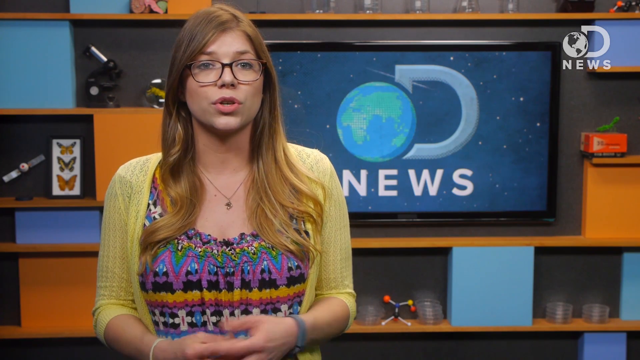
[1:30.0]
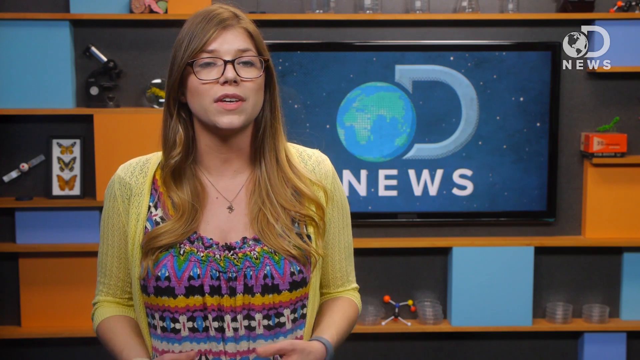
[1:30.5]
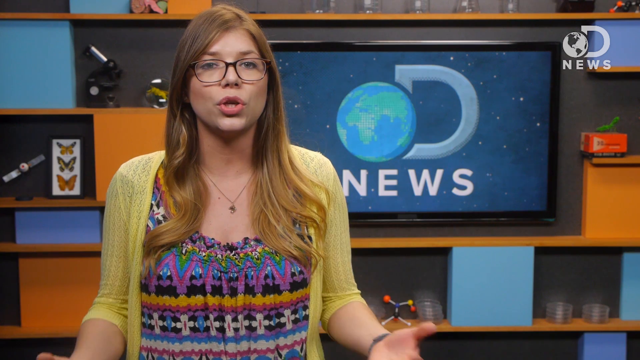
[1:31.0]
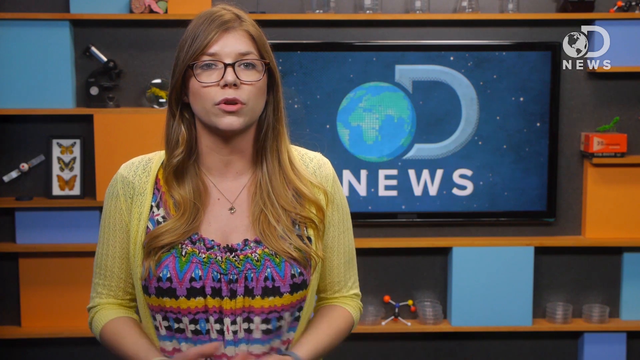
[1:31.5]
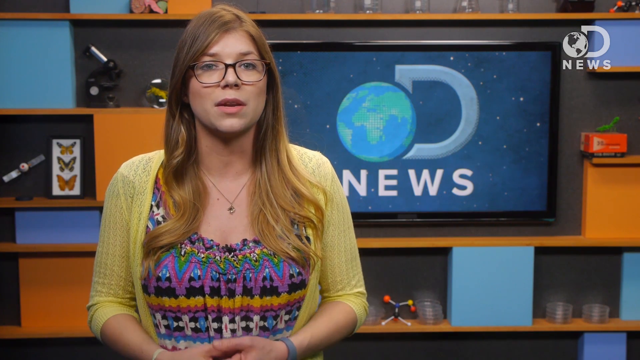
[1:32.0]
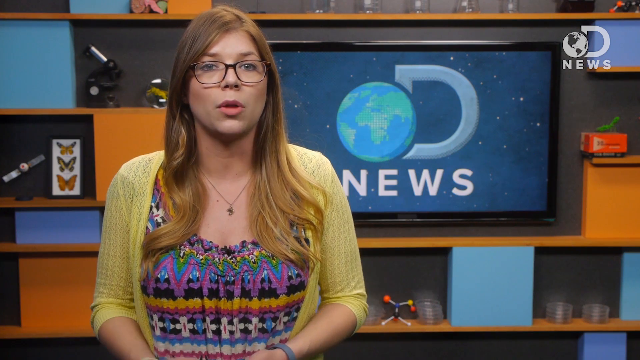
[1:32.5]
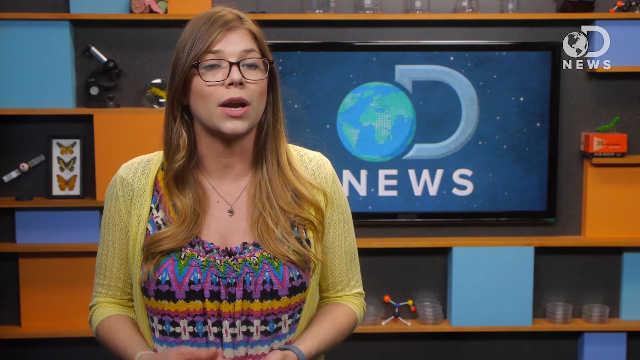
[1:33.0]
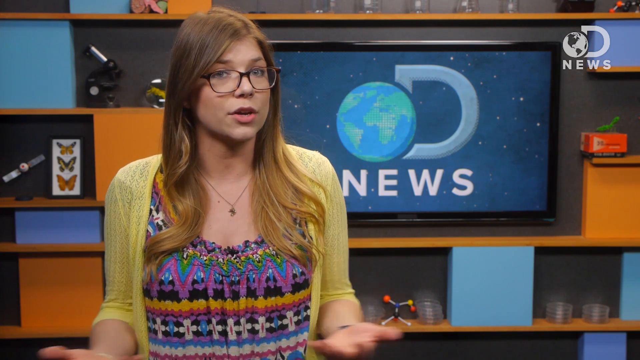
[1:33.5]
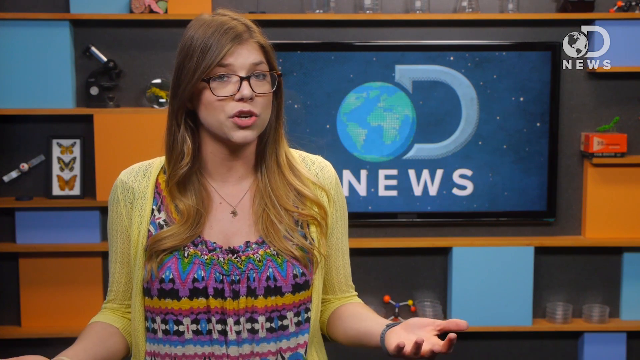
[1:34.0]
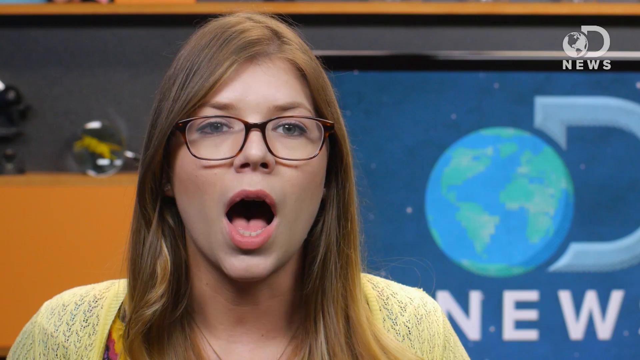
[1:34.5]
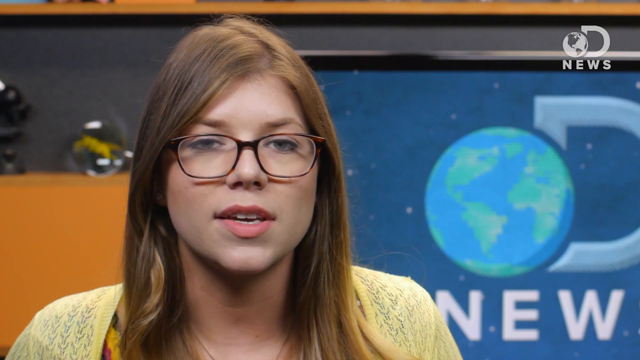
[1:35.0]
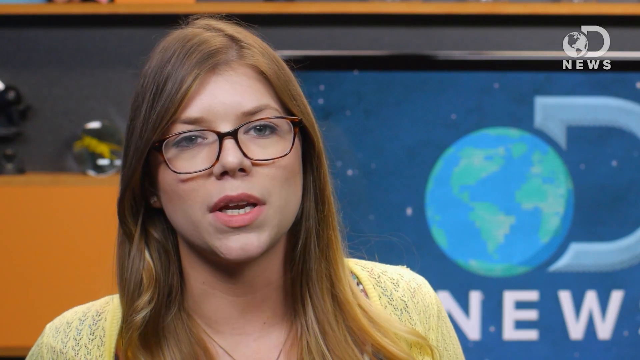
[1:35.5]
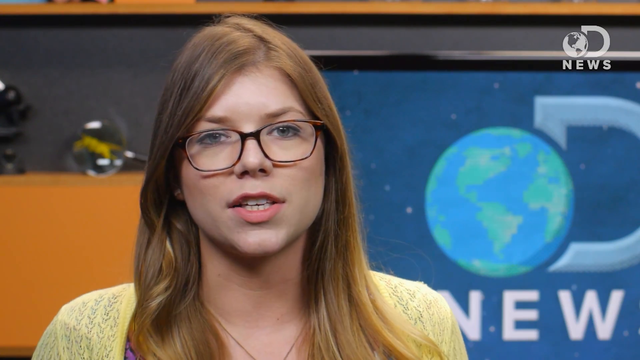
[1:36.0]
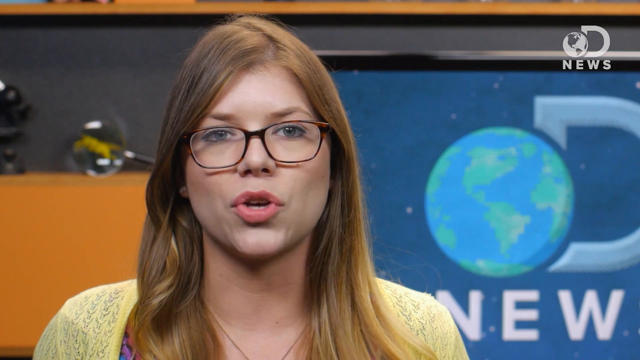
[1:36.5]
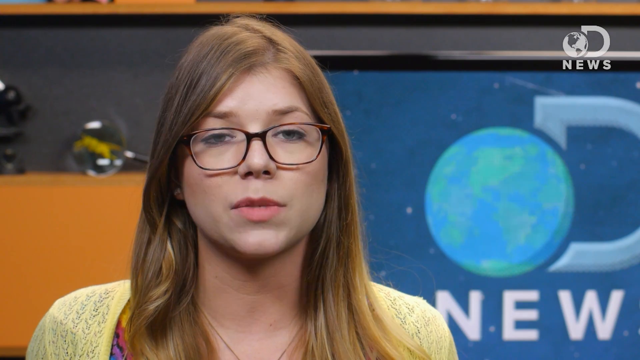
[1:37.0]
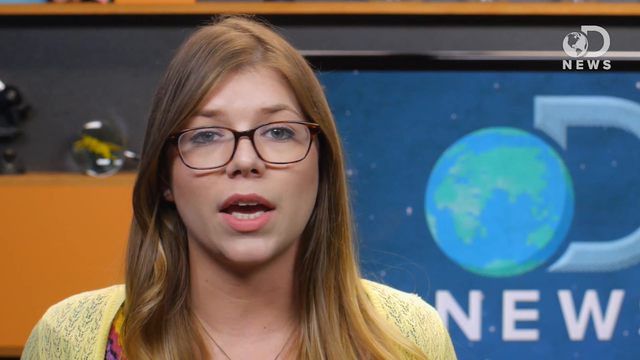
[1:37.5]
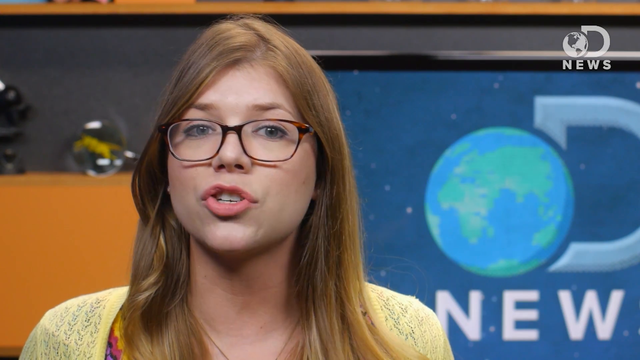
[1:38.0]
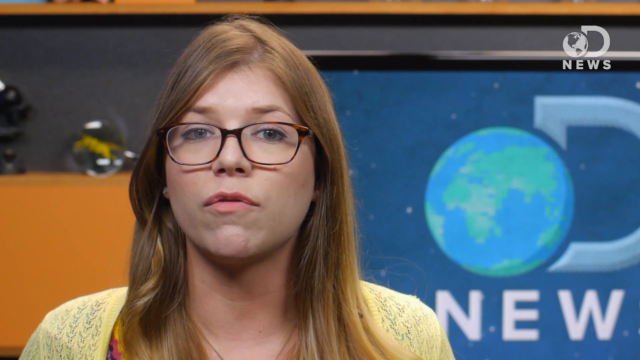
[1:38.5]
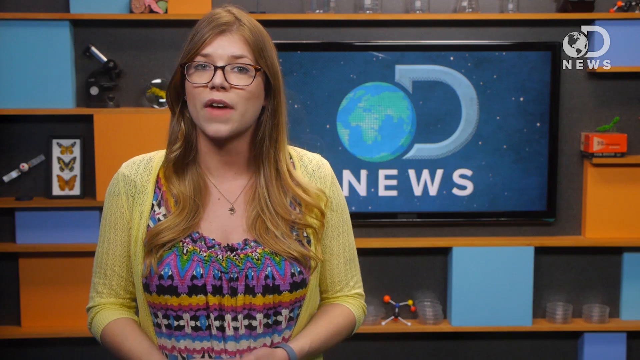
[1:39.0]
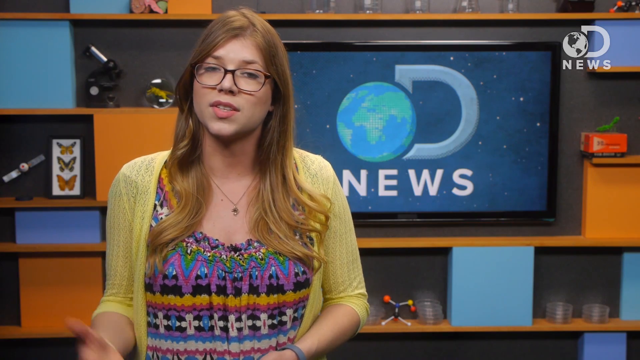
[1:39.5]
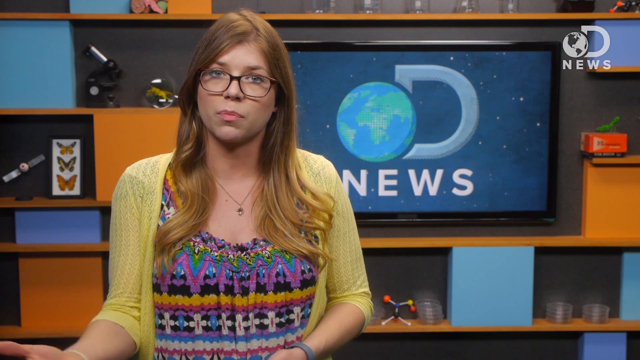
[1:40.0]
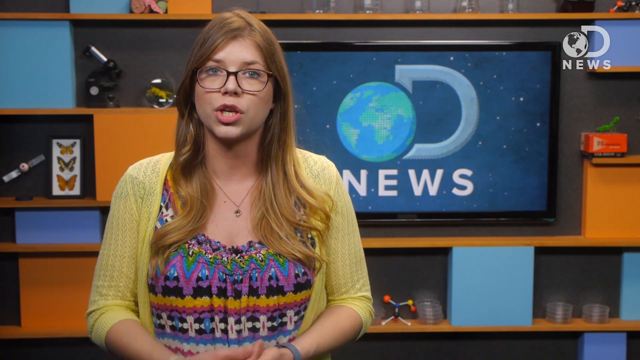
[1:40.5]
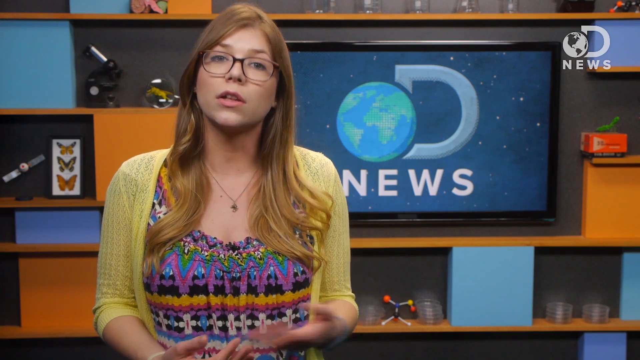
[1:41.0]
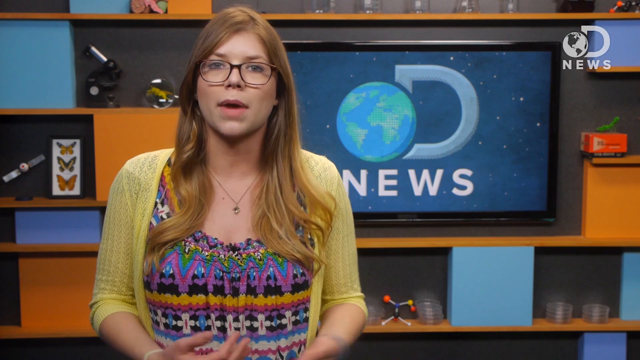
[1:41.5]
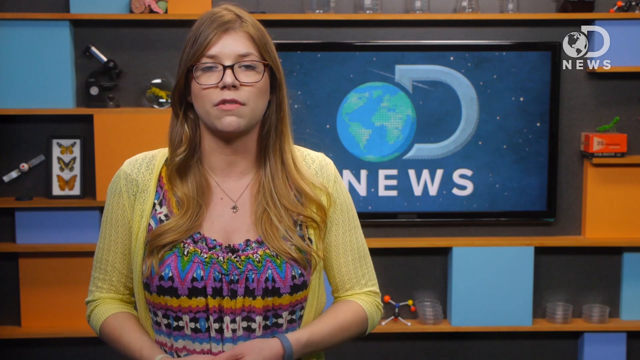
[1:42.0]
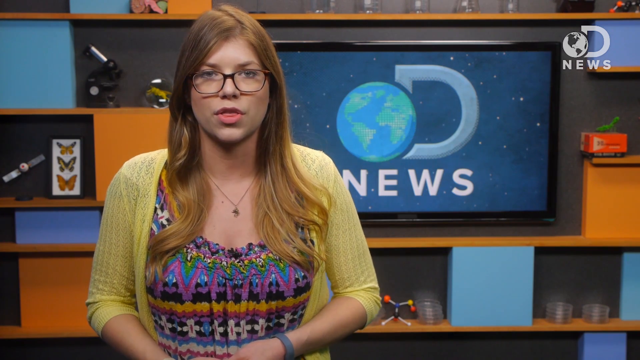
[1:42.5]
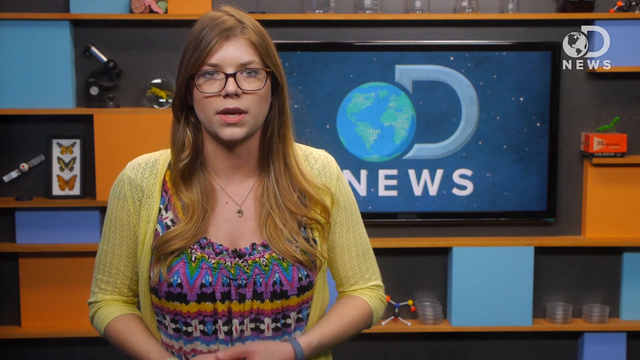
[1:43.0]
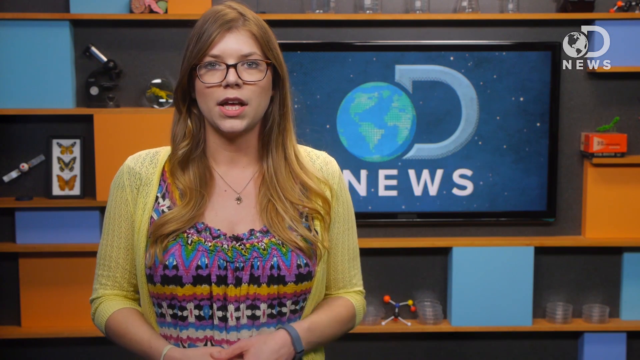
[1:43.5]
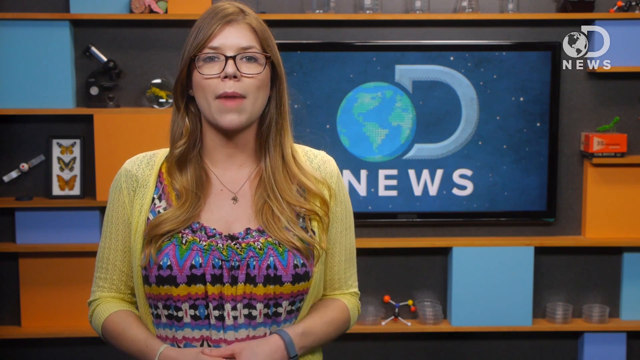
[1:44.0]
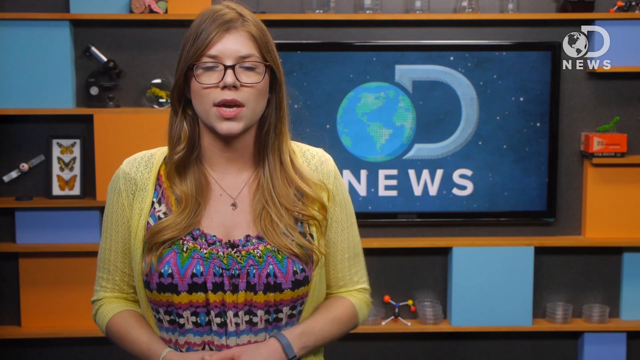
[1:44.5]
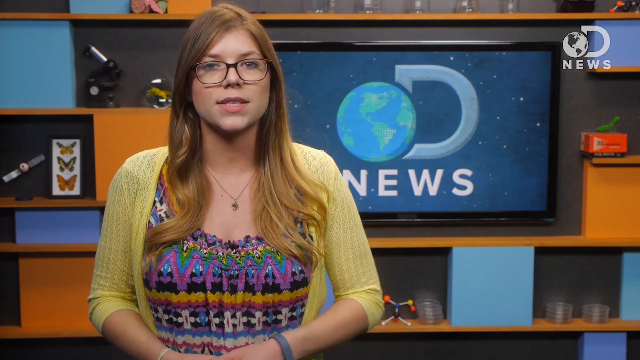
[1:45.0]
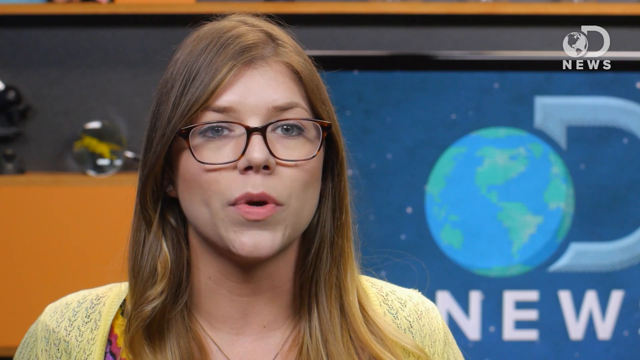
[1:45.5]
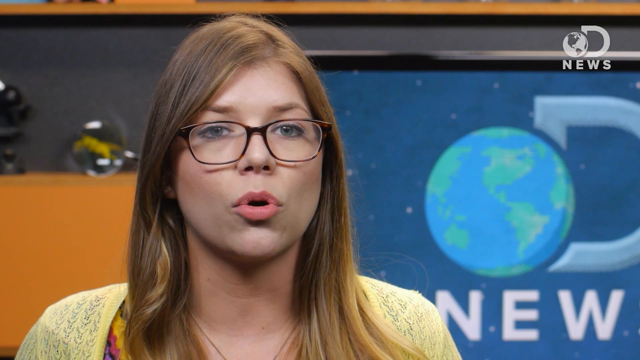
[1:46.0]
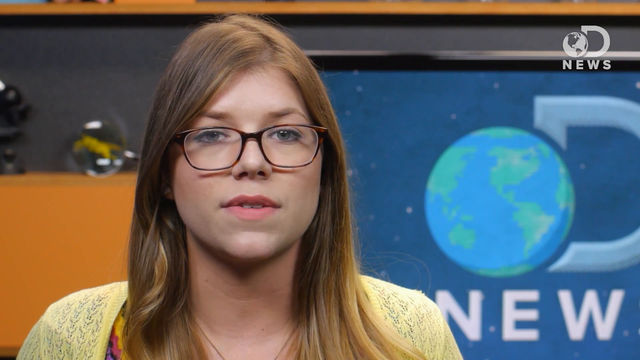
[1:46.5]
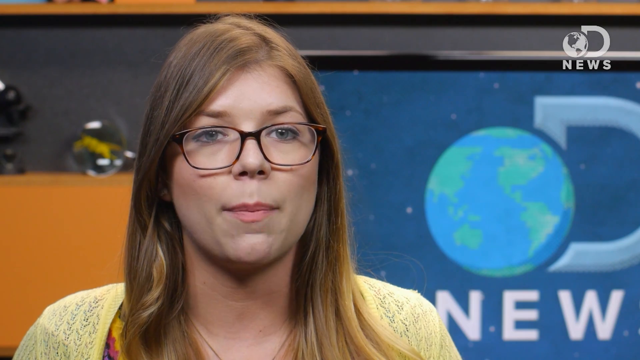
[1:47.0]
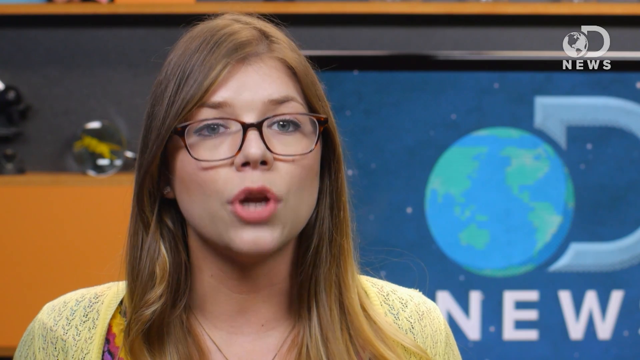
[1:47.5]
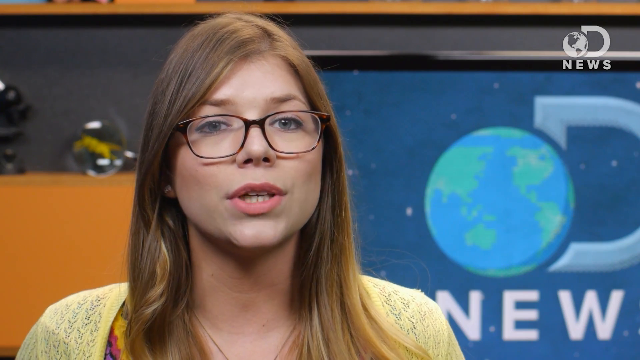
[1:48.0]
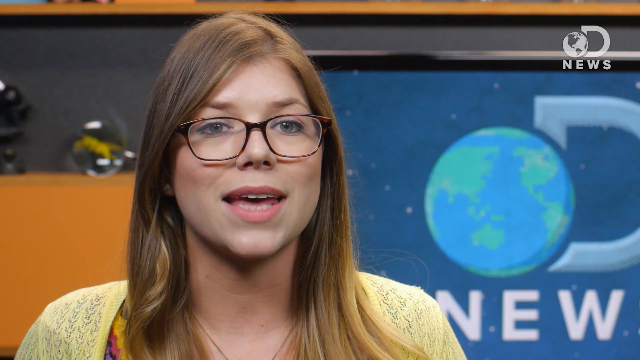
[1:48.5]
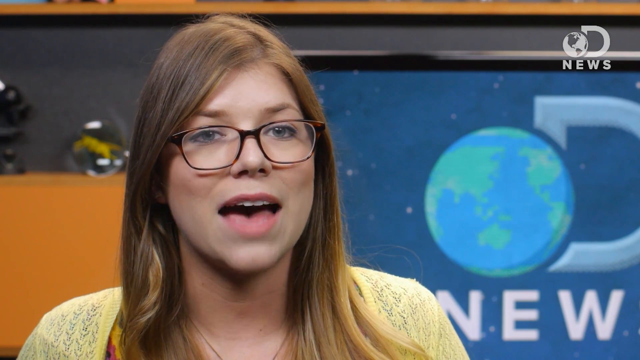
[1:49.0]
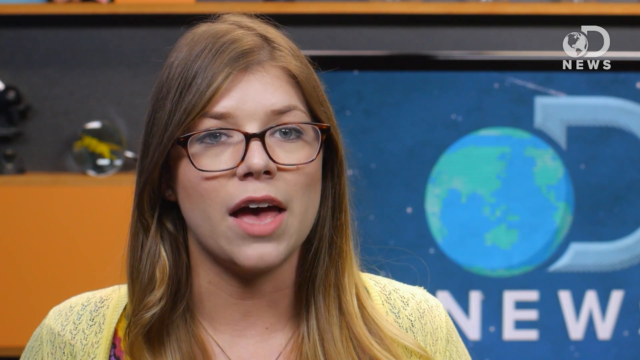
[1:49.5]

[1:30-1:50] In a waist-up shot, the reporter stands in the Discovery News studio with her hands folded in front of her. She separates them, pinches her fingers and thumbs together, lifts them up and down once, then throws her hands out wide and brings them back together. With her hands together in front of her, she continues to speak and bounces her elbows against her sides. She throws her hands out again, palms upward, elbows bent at about 90 degrees. The video immediately cuts to a shoulder-up view of her continuing to speak into the camera with her hands folded in front of her; she holds her left hand palm up with fingers out to her left, folds it back in, and repeats the gesture with her right hand. She keeps speaking with her hands folded in front of her and begins bouncing her elbows against her sides again. The video then cuts to another shoulders-up shot of her speaking into the camera. Behind her the whole time is a complicated shelving unit with yellow, orange, and blue backgrounds, with a TV screen in the middle showing a Discovery News logo on a space and stars background. On the shelving are objects such as a molecule model, pictures of butterflies, and a microscope.